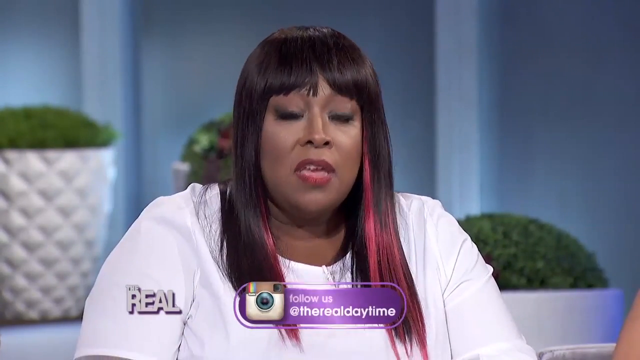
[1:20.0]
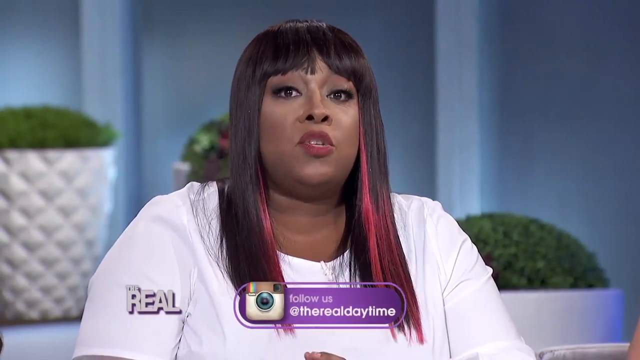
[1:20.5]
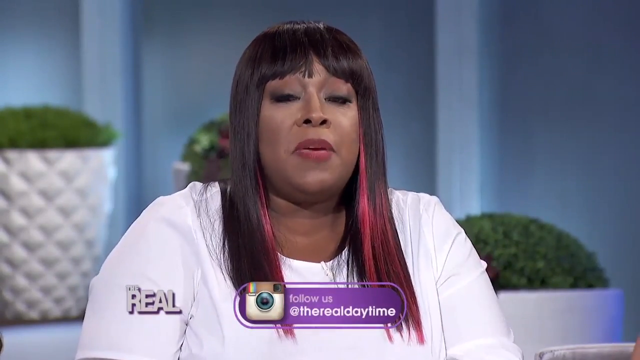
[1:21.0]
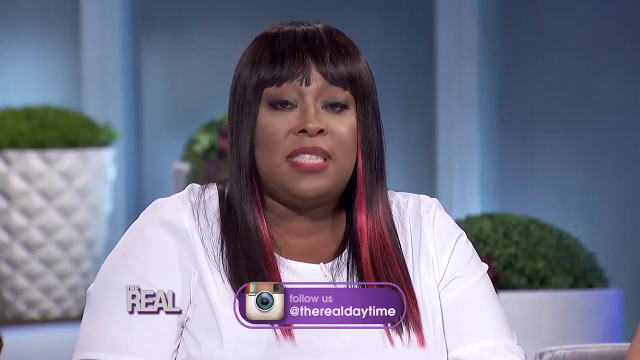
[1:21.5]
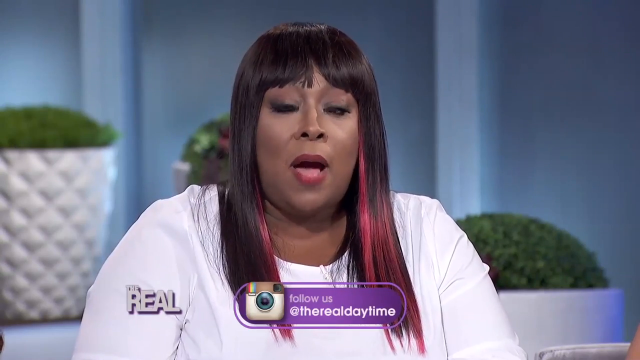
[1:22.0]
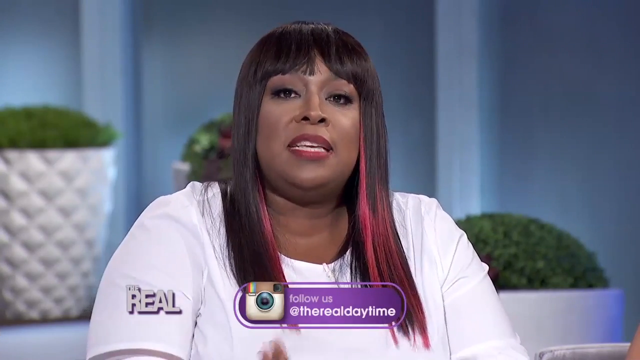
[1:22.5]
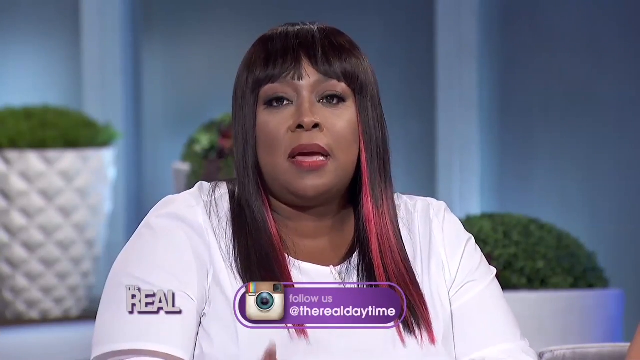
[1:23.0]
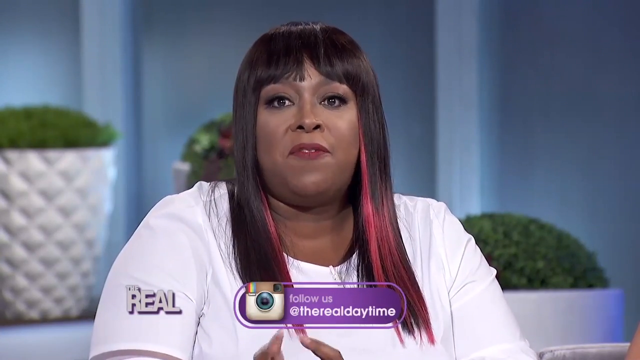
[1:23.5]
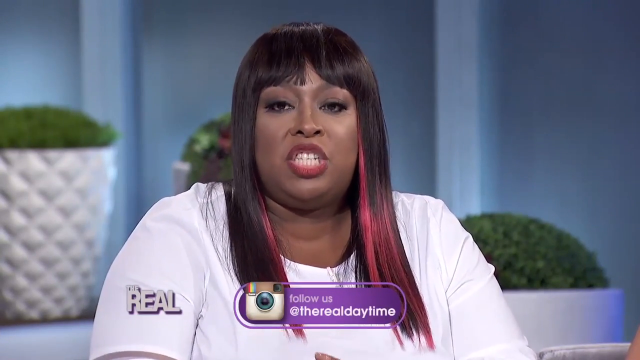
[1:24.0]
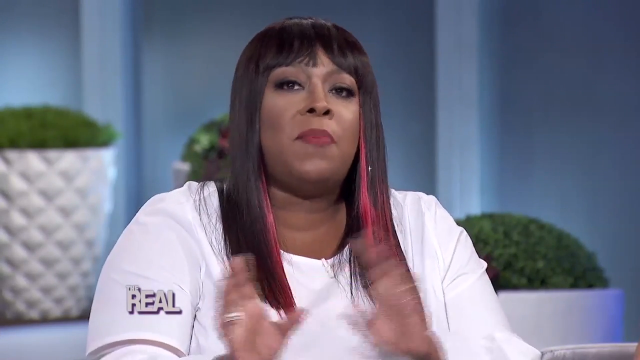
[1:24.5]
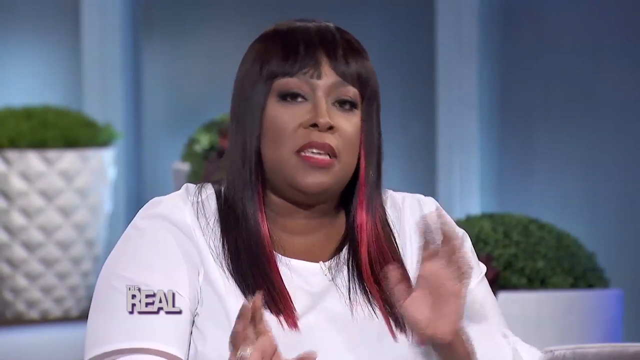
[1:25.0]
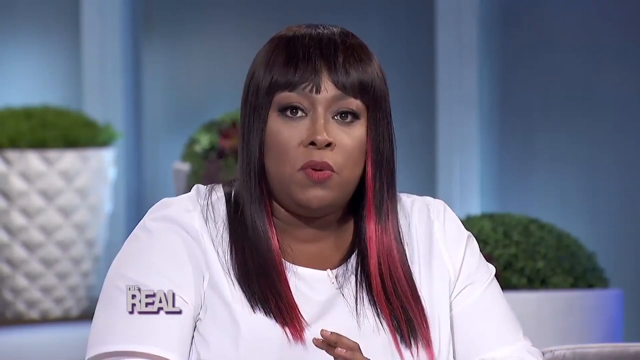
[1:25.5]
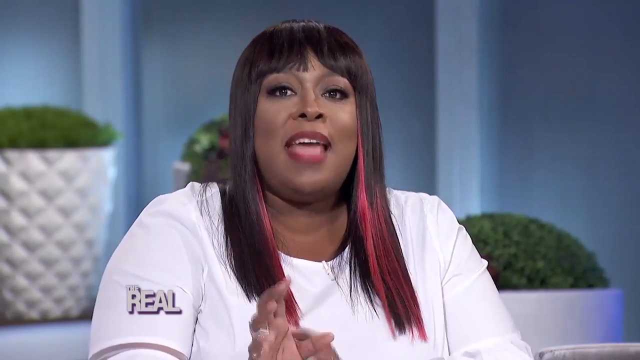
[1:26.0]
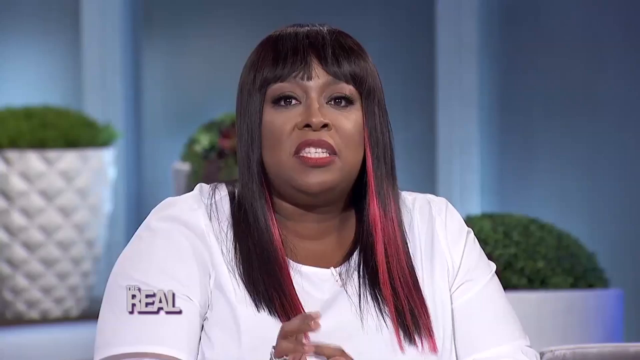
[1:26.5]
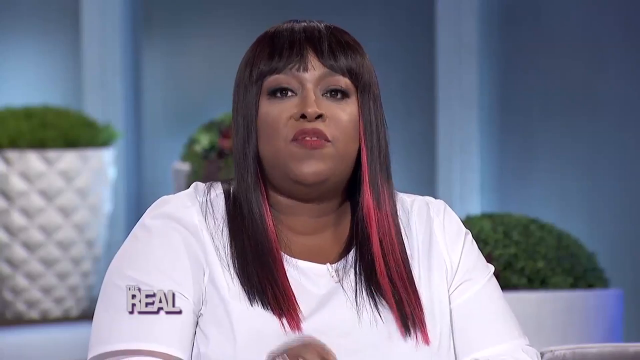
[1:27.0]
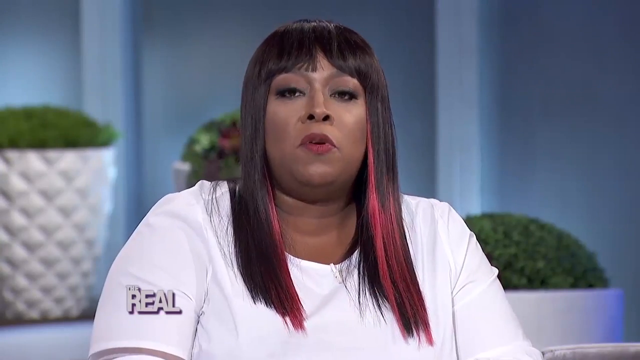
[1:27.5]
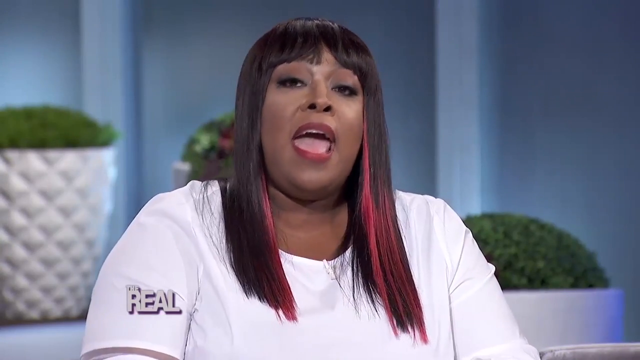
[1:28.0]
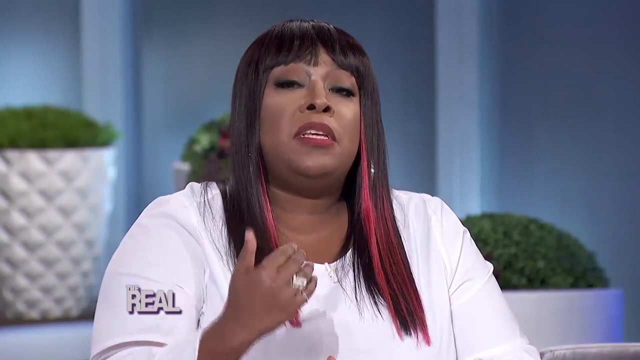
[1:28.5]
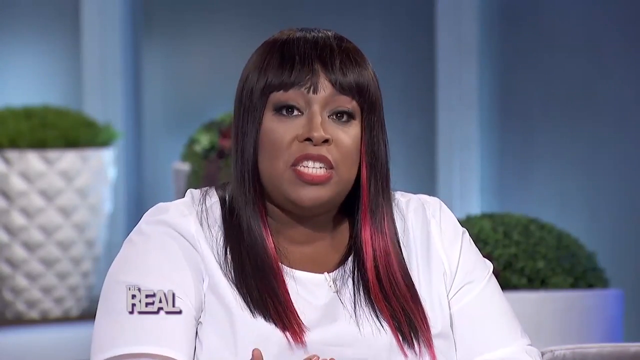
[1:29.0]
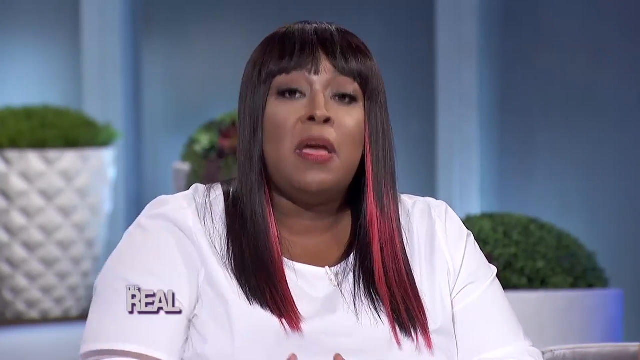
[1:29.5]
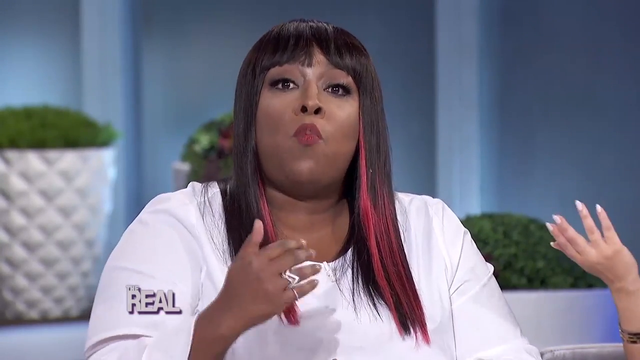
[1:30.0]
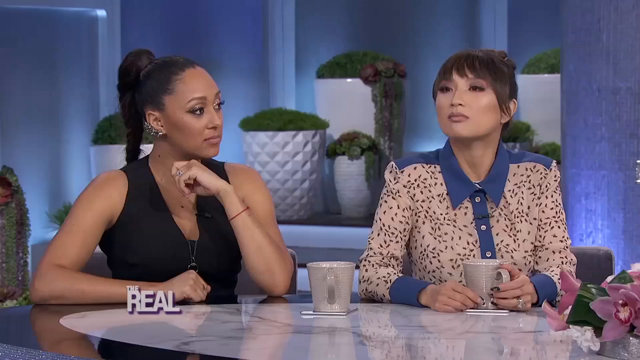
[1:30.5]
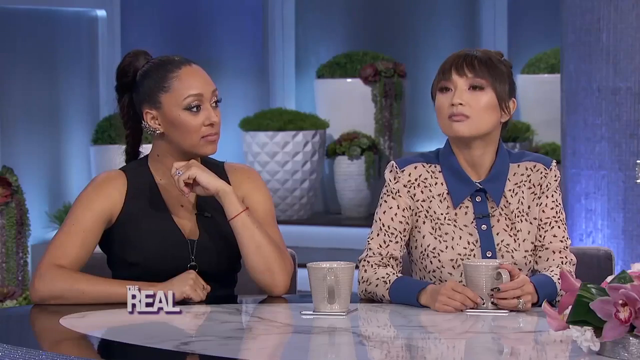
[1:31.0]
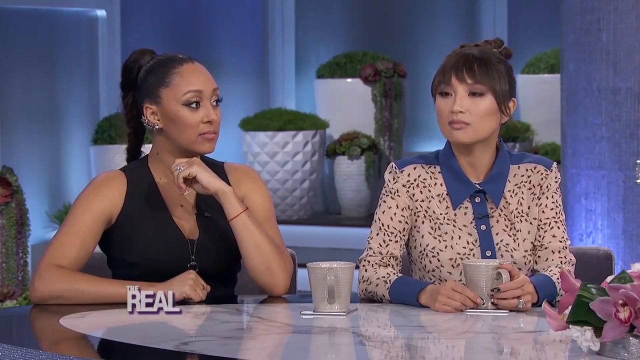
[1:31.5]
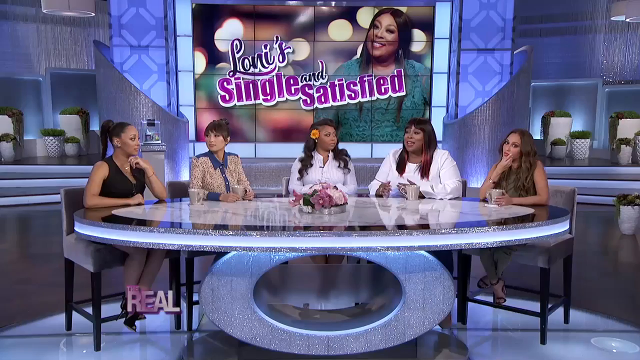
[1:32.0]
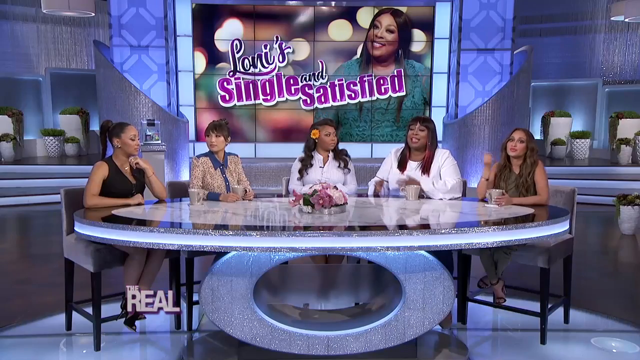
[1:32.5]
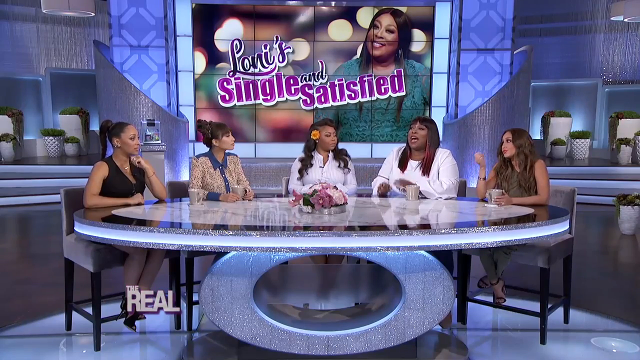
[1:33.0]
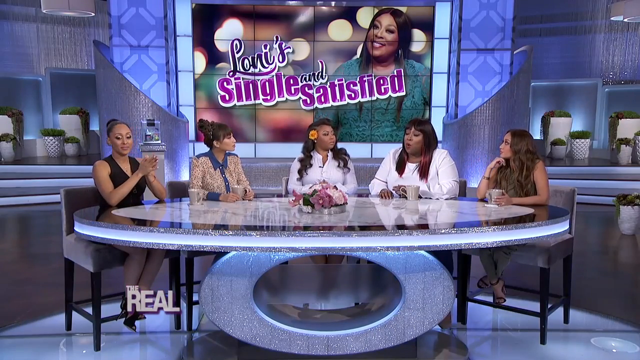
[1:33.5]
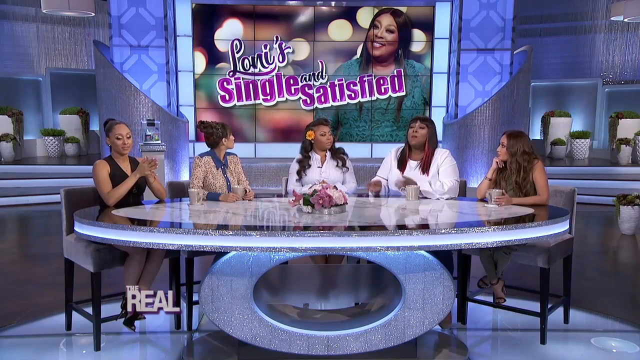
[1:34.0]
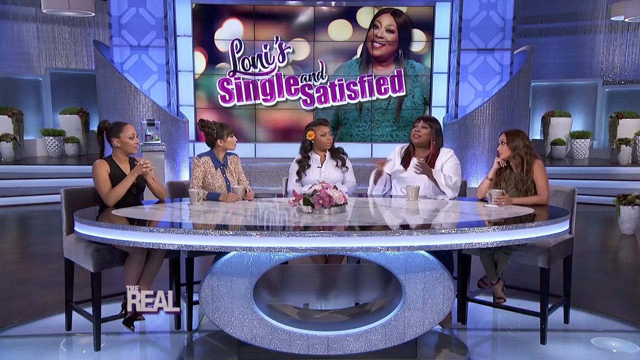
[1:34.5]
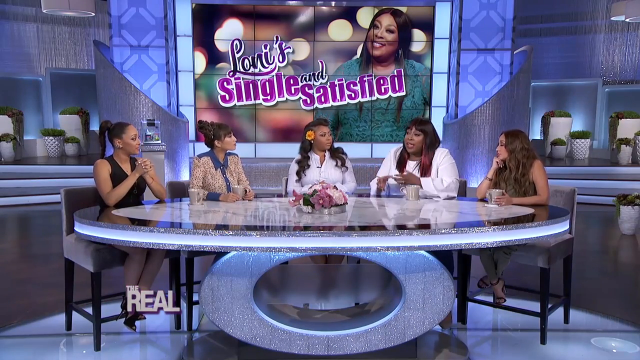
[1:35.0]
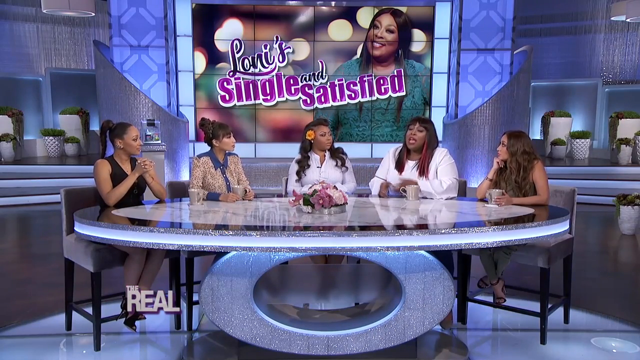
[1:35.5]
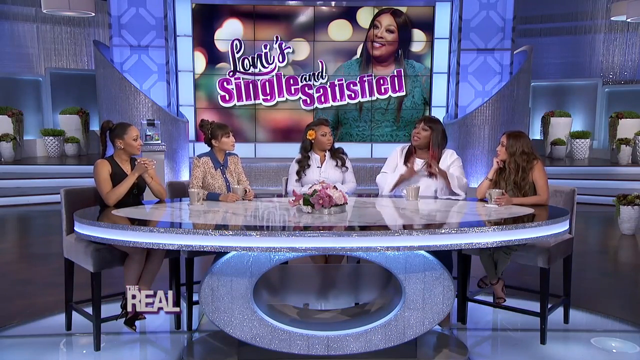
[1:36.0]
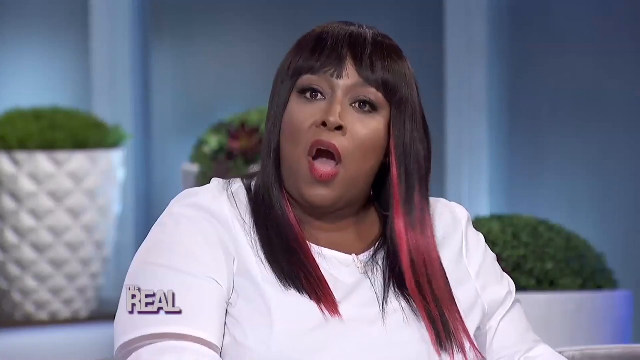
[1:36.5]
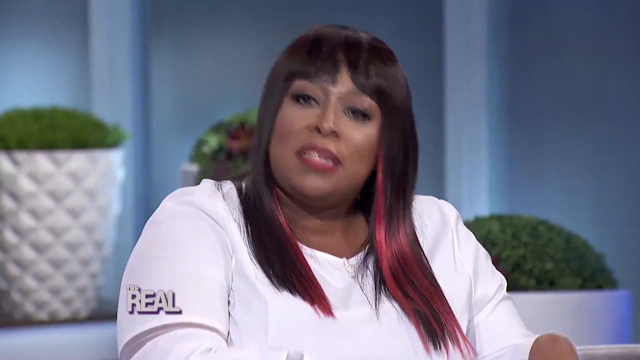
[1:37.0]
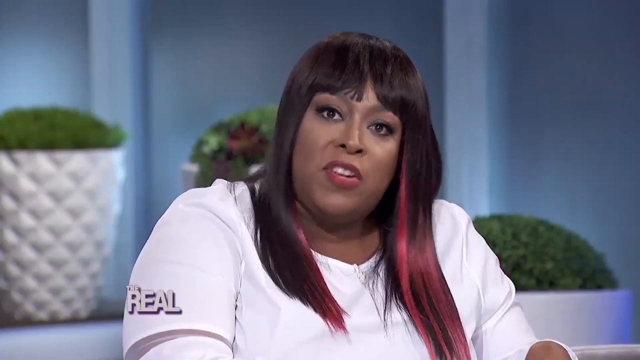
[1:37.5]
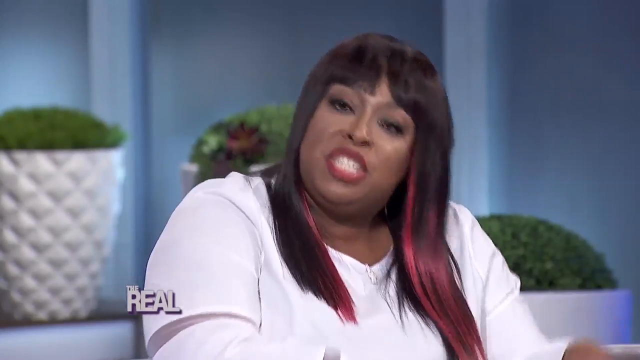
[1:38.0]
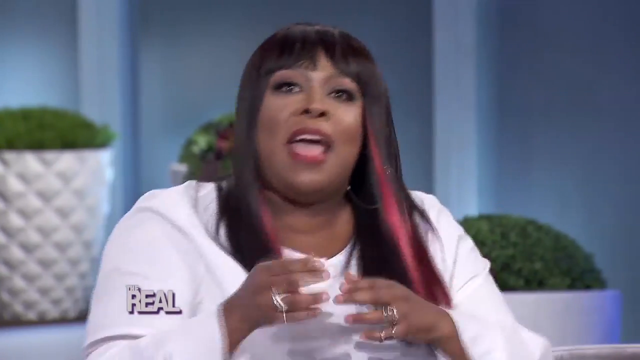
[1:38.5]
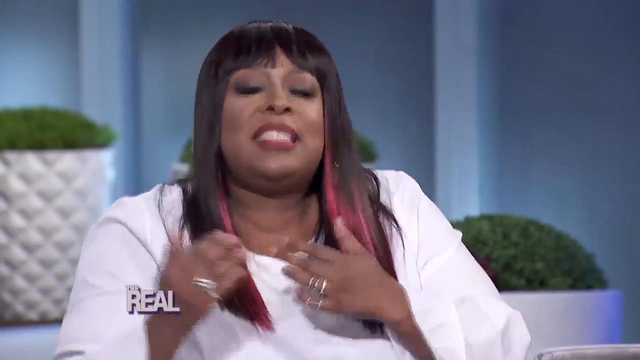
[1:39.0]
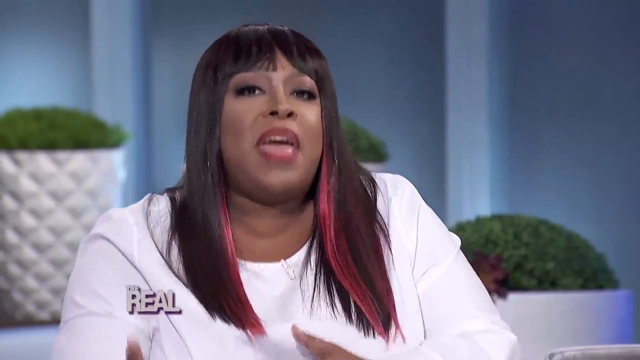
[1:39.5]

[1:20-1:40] The woman with straight black hair and pink highlights speaks directly to the camera; at times her hands come into frame, sort of waving around, and then disappear from the frame. Two people are then shown, the woman with the bun and bangs and the woman with the braided ponytail, both nodding in agreement. All five women around the table are shown, and the woman with straight black hair and pink highlights is speaking, gesturing animatedly with her hands. She seems to speak passionately, her arms kind of moving up and down toward the side as if she is kind of saying "this happens on this and this", and she seems to have a serious expression.